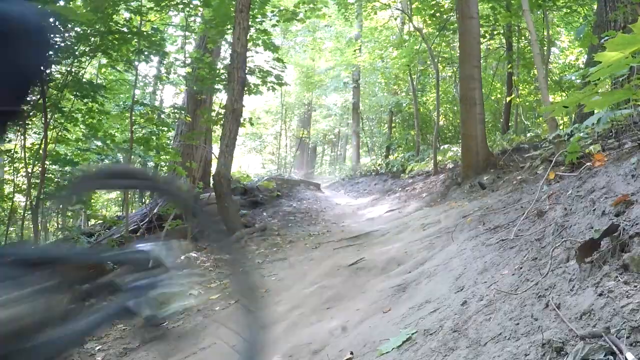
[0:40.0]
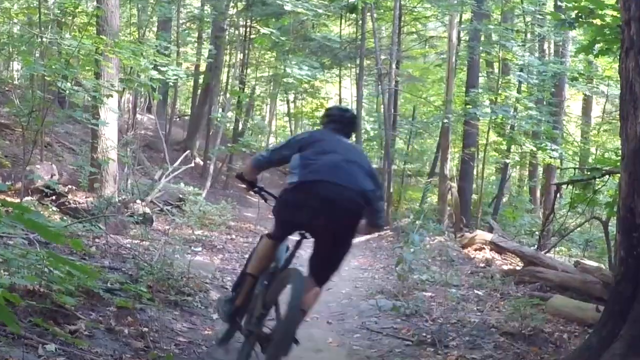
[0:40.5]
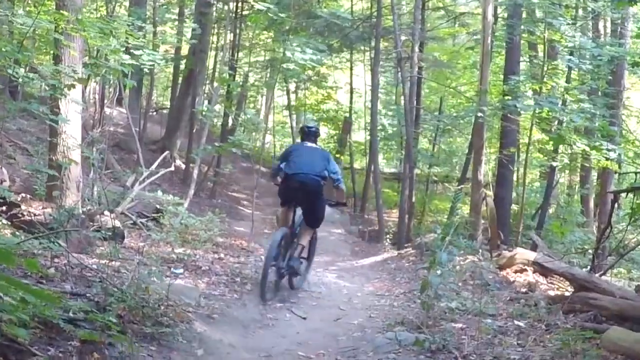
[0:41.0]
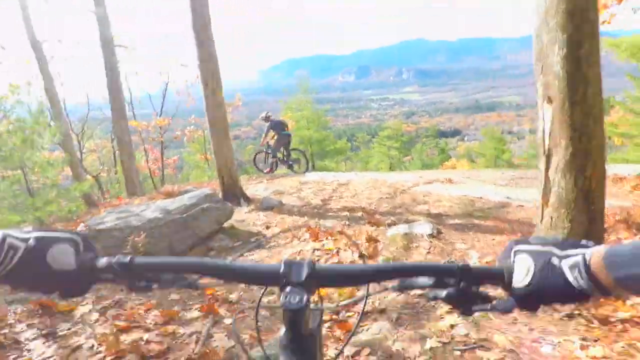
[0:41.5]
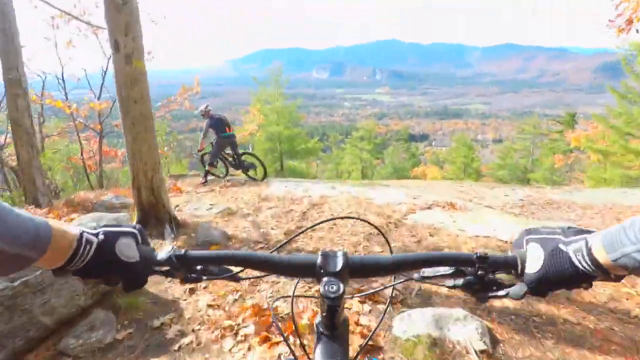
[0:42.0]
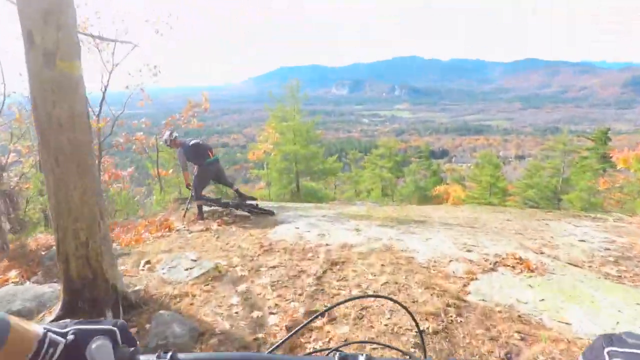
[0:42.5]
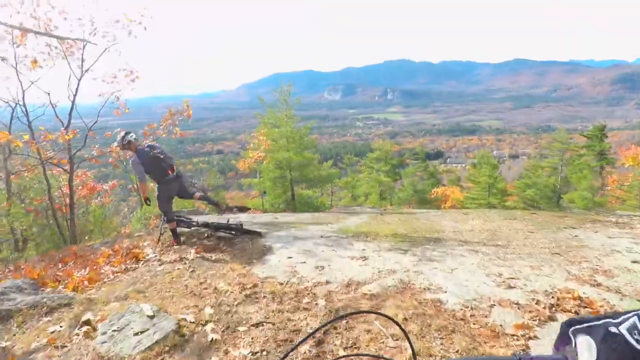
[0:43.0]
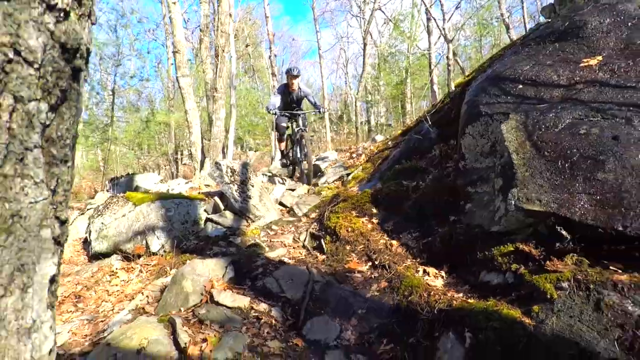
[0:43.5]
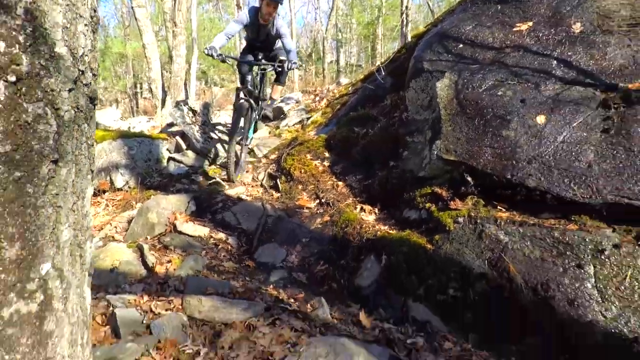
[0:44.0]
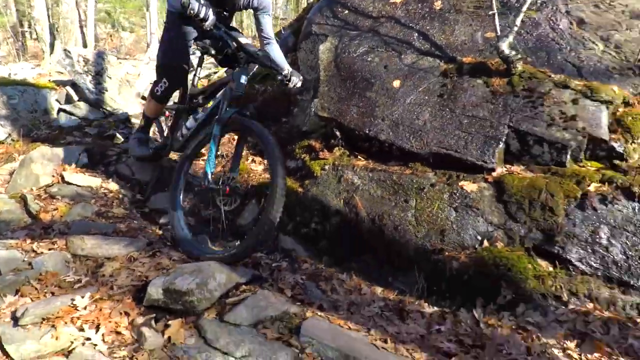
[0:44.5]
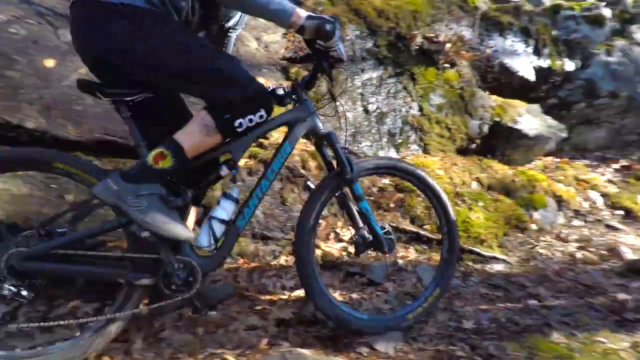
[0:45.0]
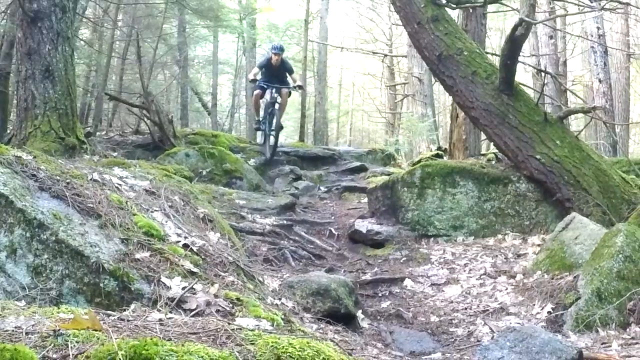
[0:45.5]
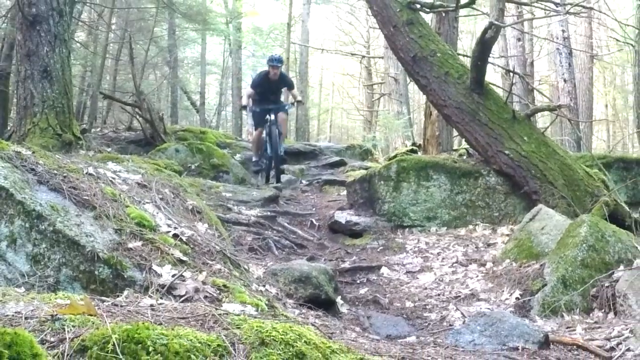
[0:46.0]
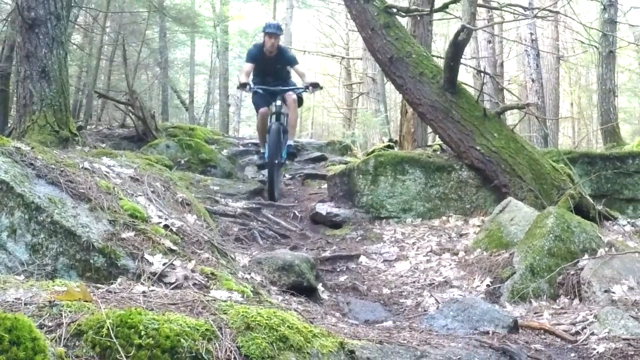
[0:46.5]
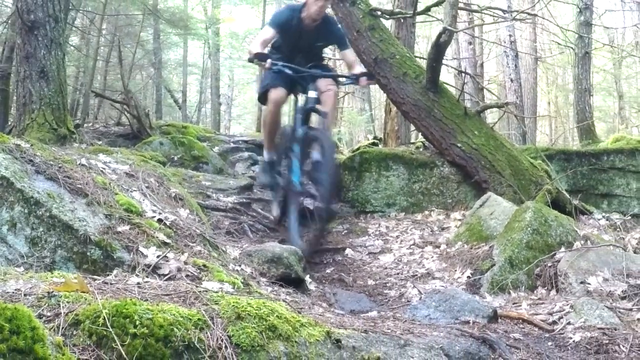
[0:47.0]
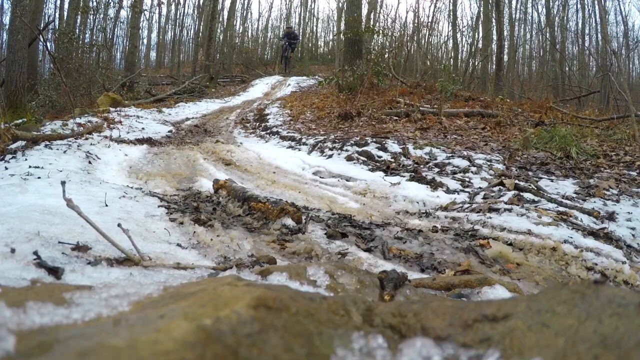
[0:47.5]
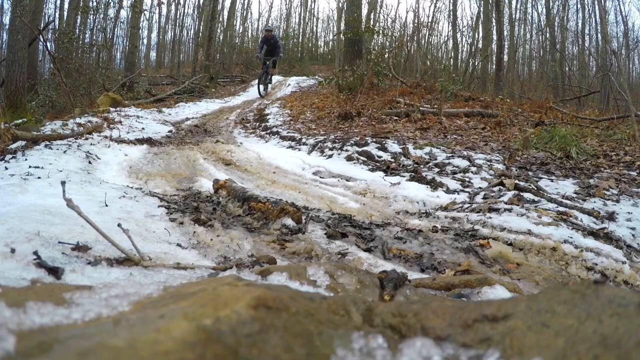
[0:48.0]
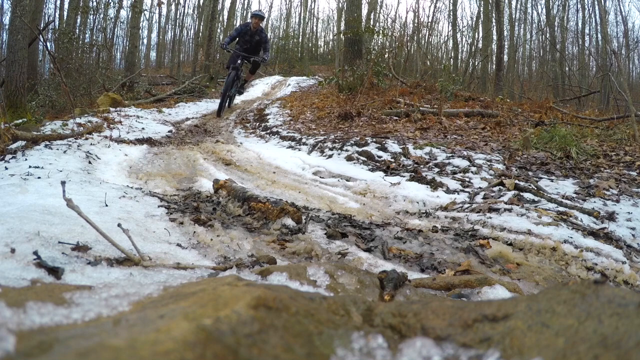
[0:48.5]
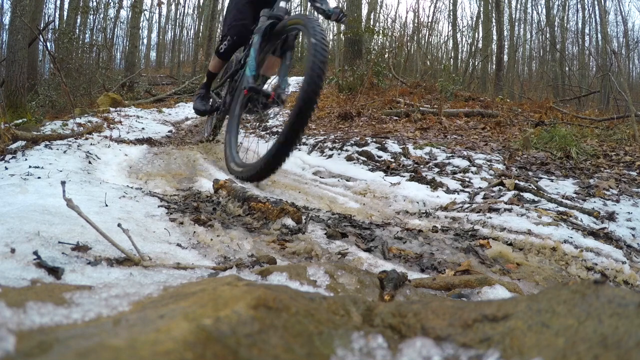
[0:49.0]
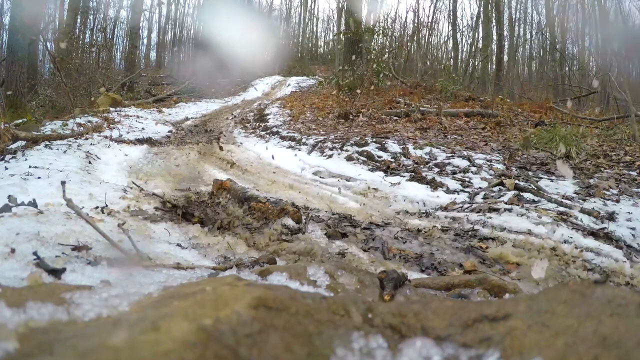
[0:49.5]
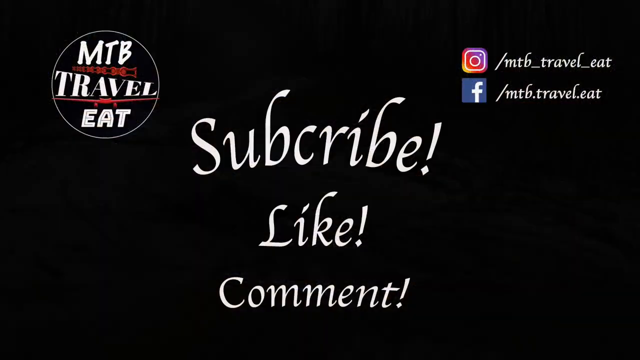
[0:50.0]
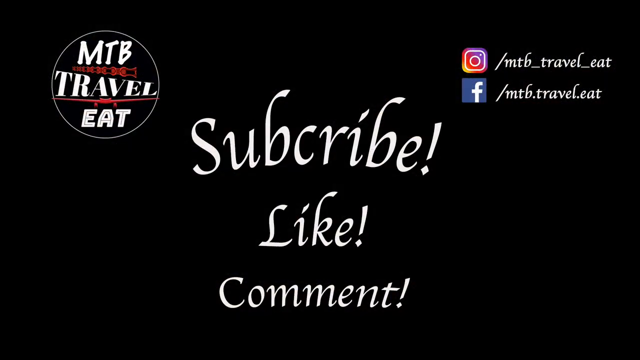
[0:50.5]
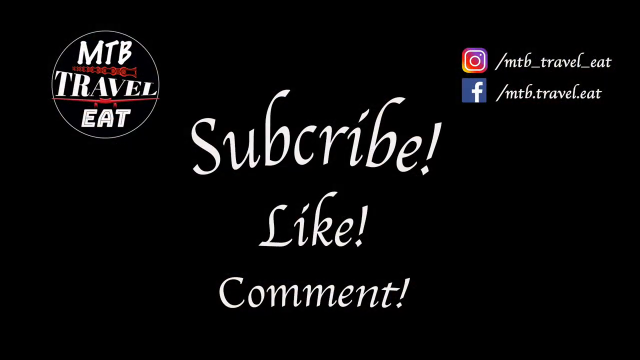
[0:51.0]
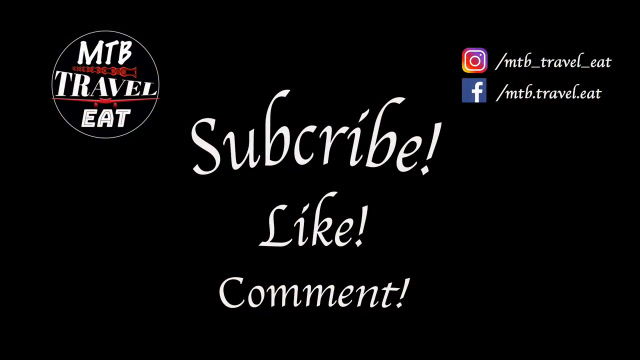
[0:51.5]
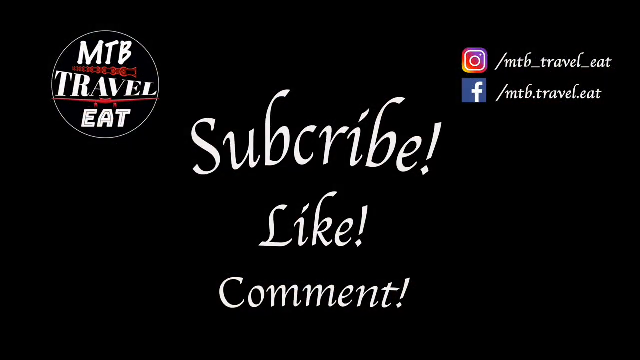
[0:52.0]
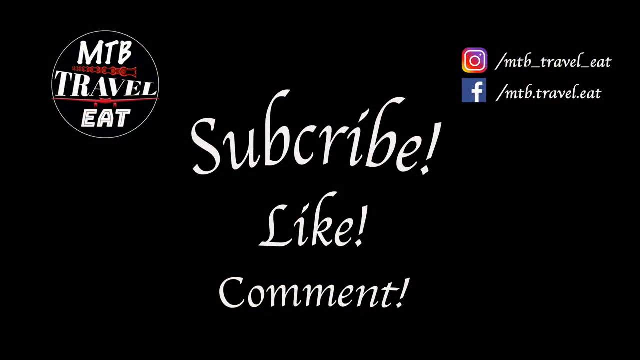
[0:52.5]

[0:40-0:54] A highlight reel shows a man riding a black bicycle in a heavily wooded forest area filled with trees, grass, dirt and other natural features. He wears a black bike suit and a helmet. A first-person view from his perspective shows him reaching a clearing and seeing another bicycle rider. A wide shot shows him riding down a slope, and then he rides down a curved slope with some snow on it. The screen fades out to black. At the top left is a logo for MTB Travel Eat, at the top right are the man's Instagram and Facebook social media links, and in the center white text reads "Subscribe, Like, Comment".